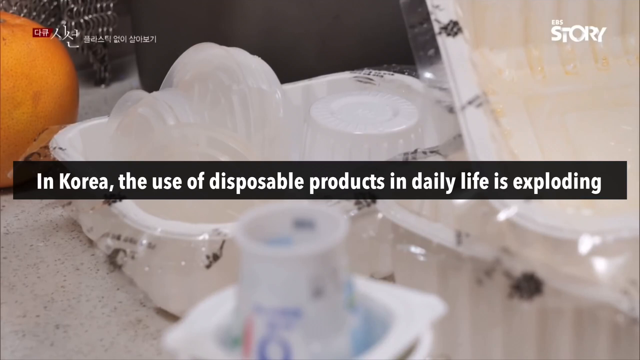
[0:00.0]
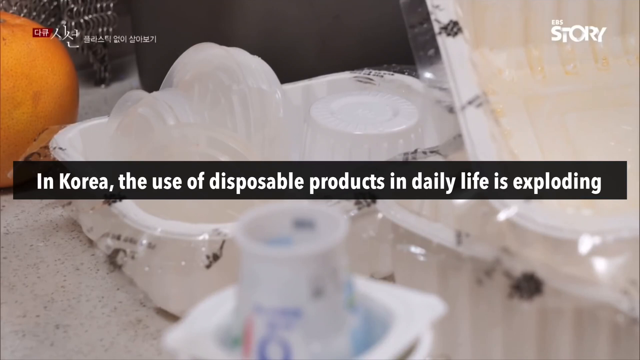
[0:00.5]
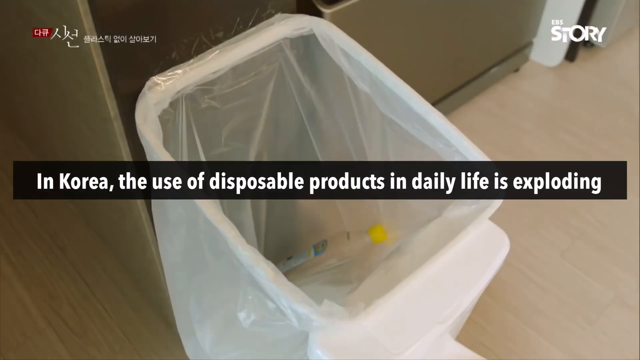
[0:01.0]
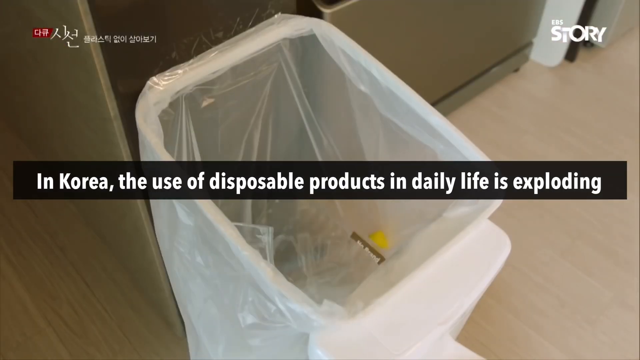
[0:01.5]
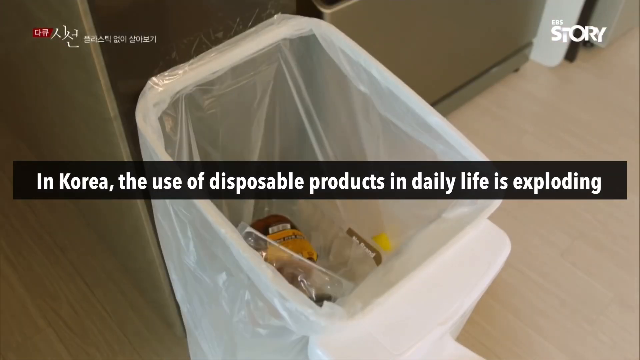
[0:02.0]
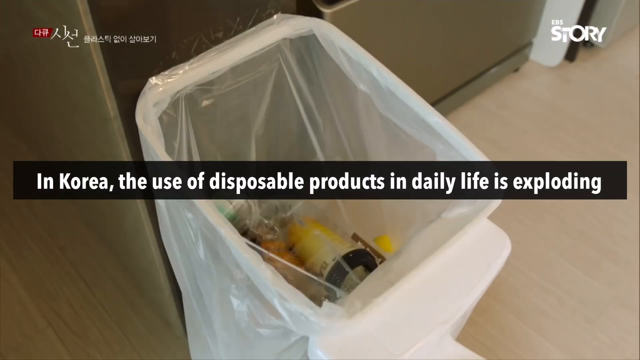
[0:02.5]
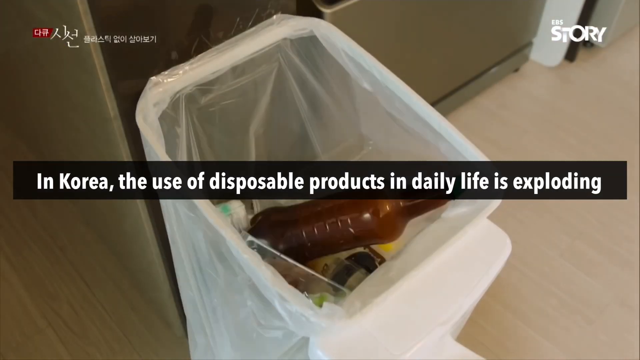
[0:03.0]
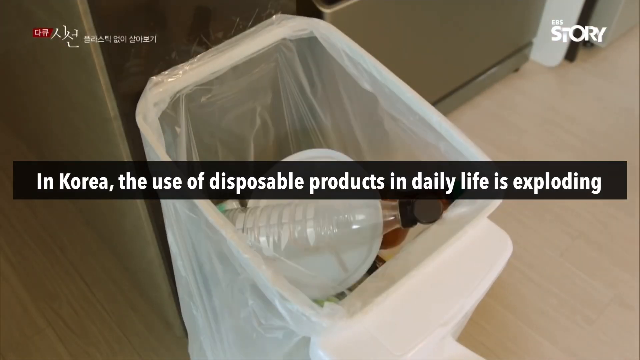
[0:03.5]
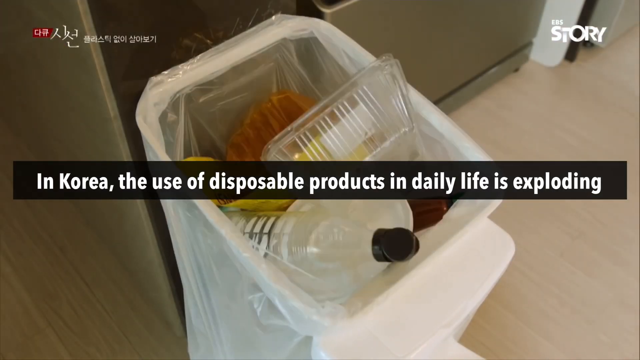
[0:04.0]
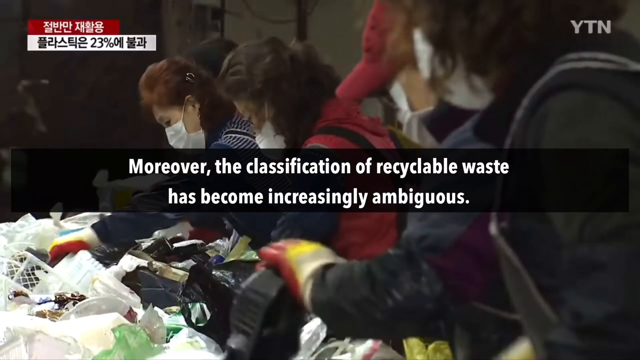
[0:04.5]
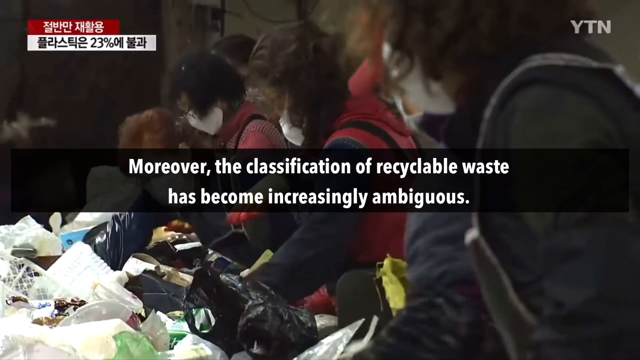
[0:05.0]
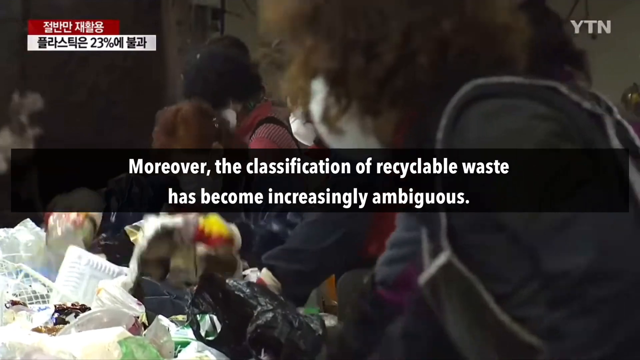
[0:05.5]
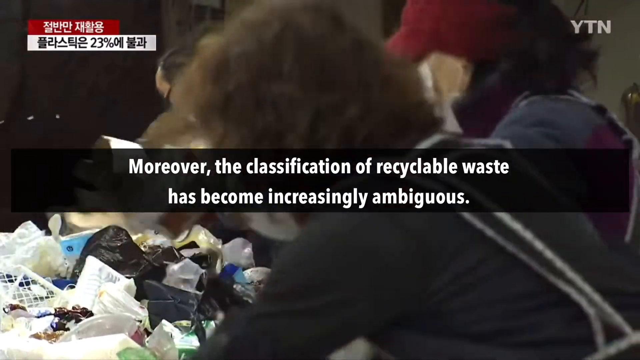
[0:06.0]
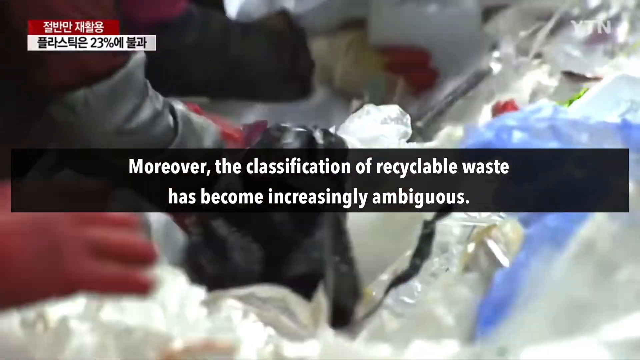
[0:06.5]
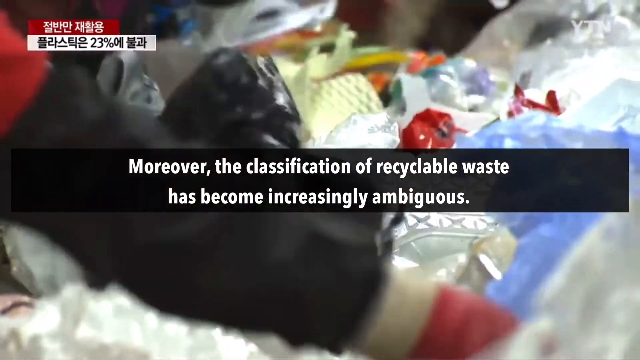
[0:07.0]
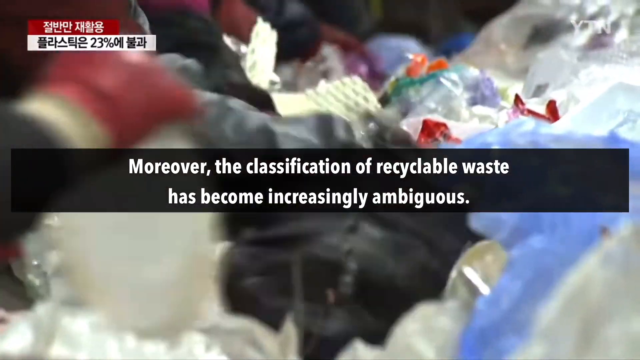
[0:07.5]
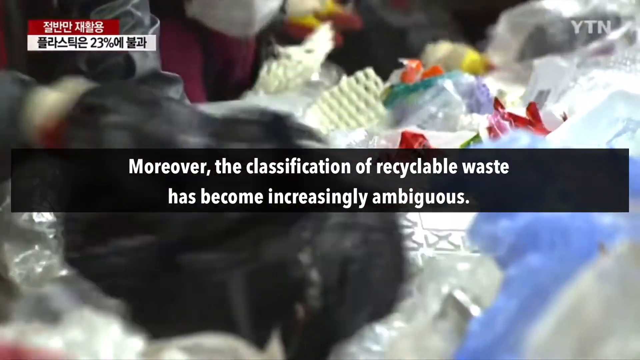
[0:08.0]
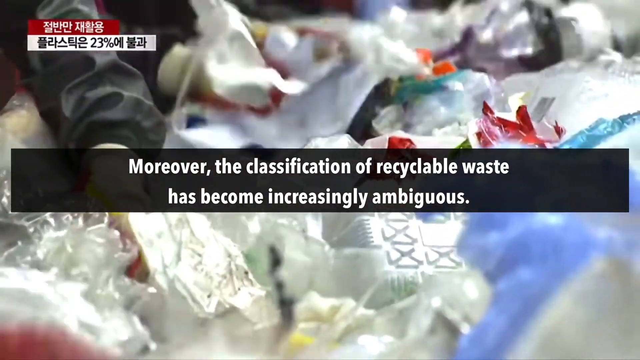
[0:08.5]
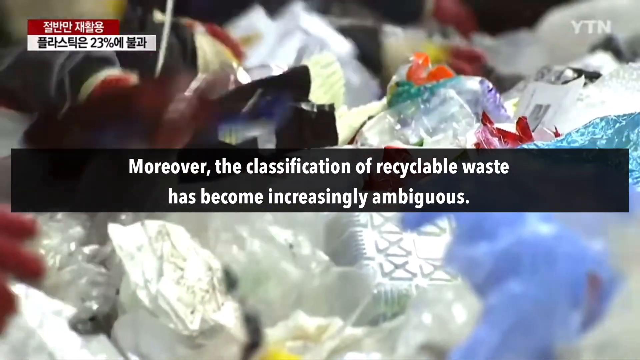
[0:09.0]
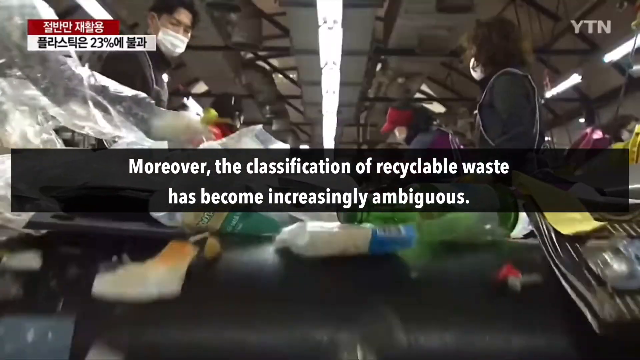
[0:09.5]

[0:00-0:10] The words "in Korea, the use of disposable products in daily life is exploding" appear in white font in the center, inside a black rectangular shape. Behind the text are an orange and other household dishes. The scene transitions to what is possibly a trash bag or a recycling bag with bottles and plastics inside. It then transitions to about four or five women going through recyclable waste, with a caption in the center that reads "moreover the classification of recyclable waste has become increasingly ambiguous."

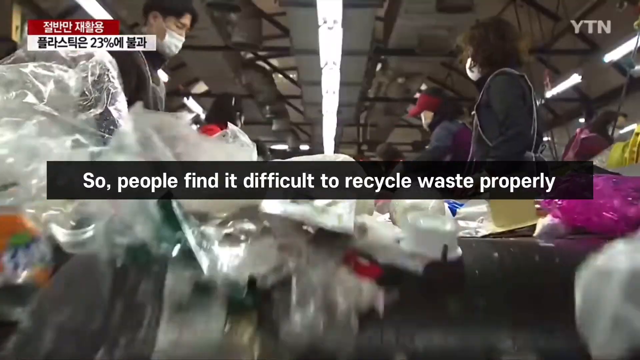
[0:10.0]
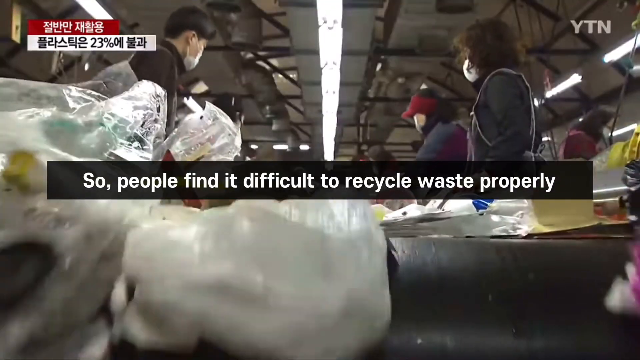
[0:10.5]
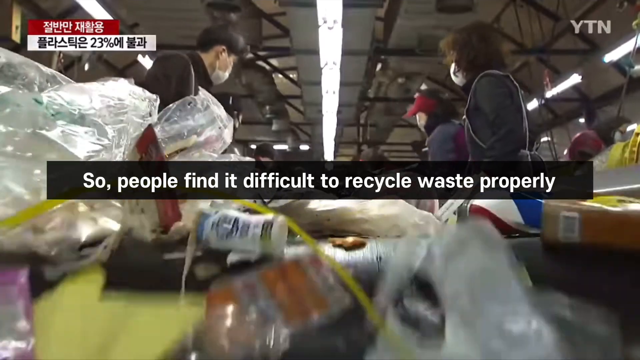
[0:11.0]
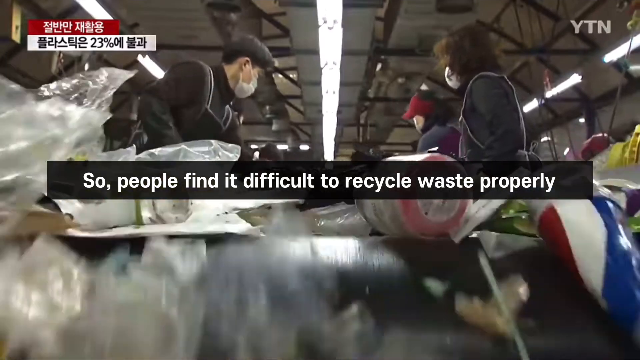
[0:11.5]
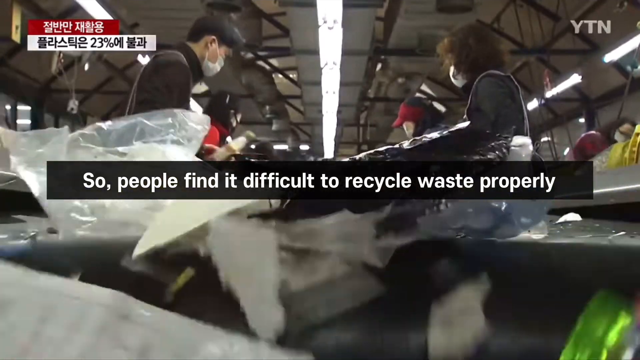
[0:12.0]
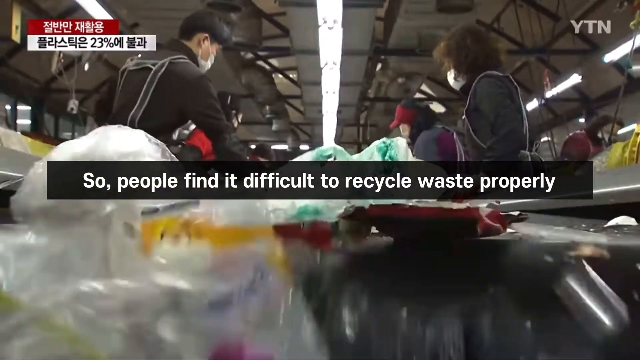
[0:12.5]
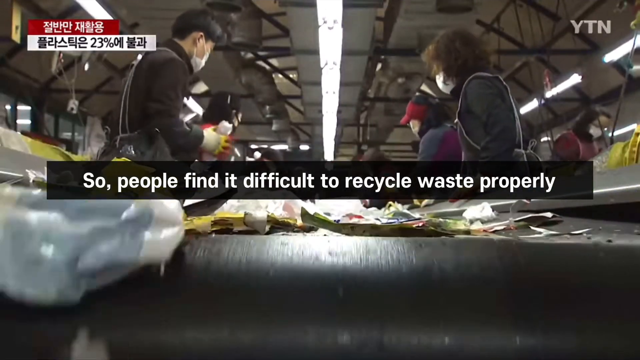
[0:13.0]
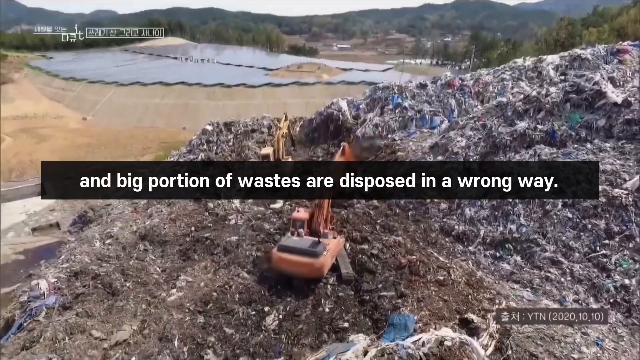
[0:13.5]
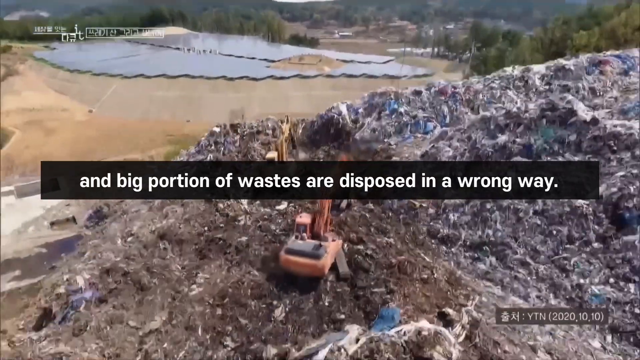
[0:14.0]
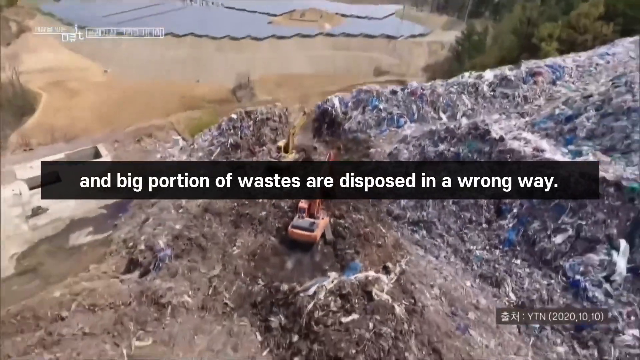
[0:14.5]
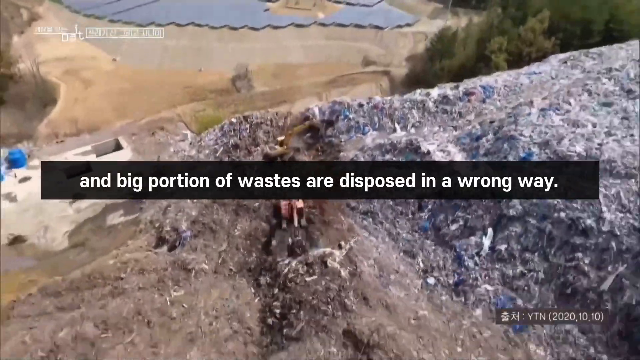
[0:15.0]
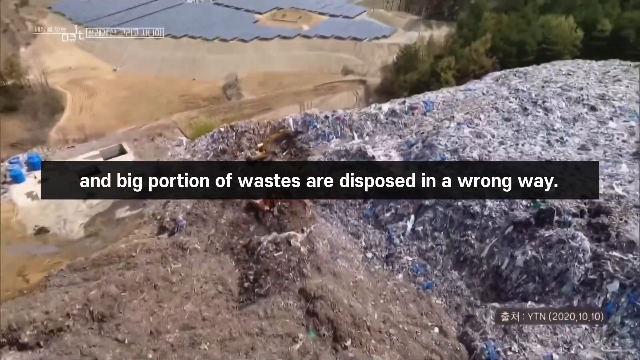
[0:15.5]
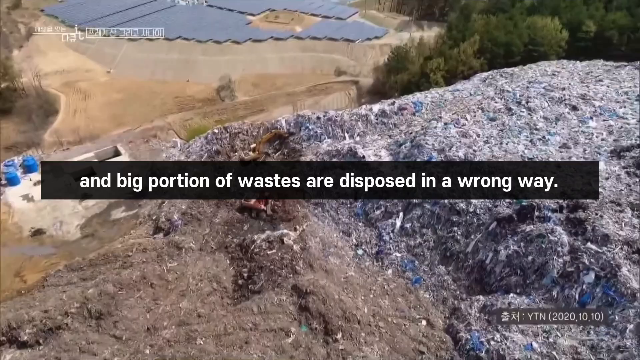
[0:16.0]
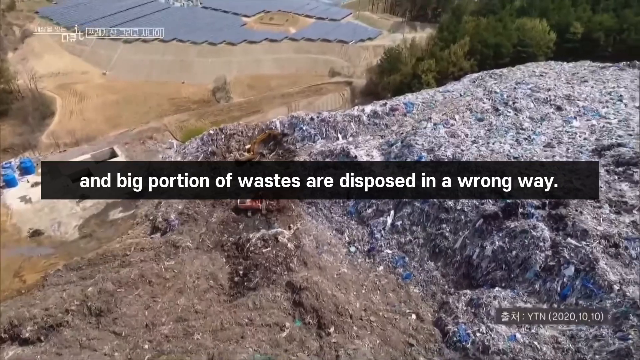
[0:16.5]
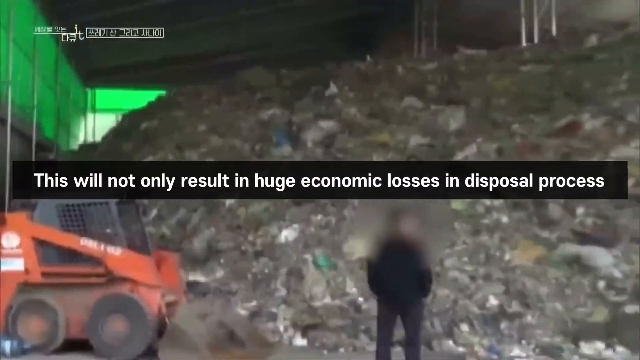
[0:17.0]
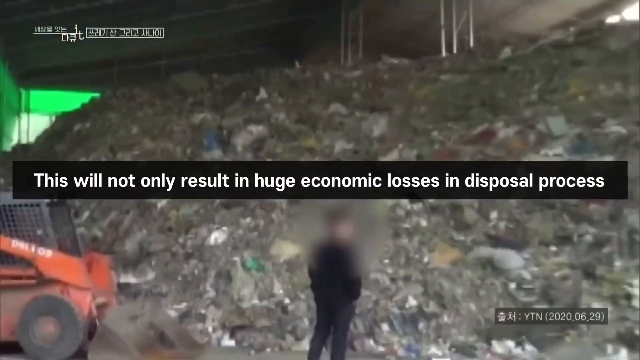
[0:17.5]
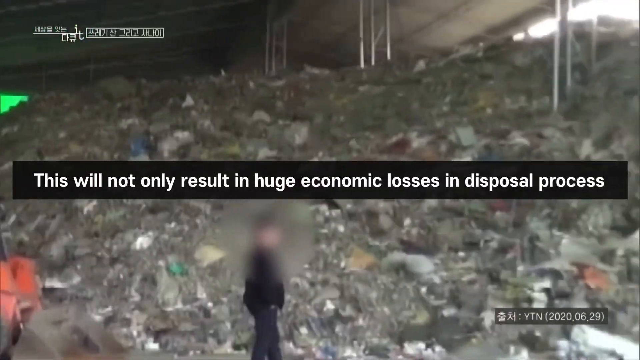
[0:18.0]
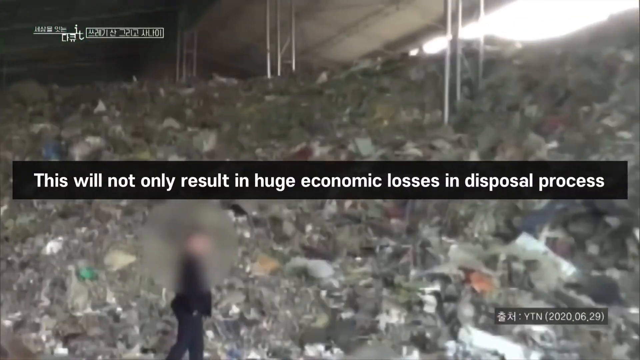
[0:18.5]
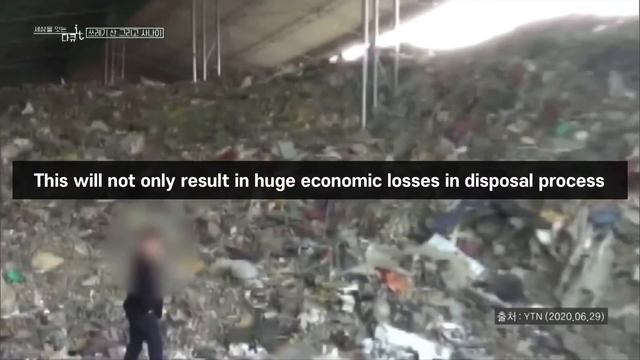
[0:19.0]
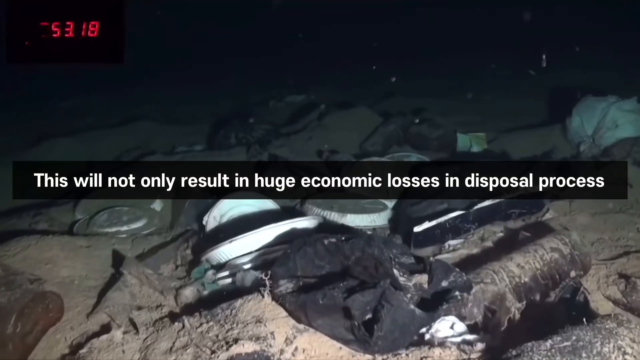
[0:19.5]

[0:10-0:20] About three or four women are gathered by a conveyor belt, sorting through recyclable waste. A caption in the center, in white font in front of a black rectangular box, reads "so people find it difficult to recycle waste properly." In the right corner are the letters "YTN", possibly representing the broadcasting station. The scene transitions to a large landfill, with the caption "and big portion of waste are disposed in a wrong way" in the center. The camera pans outward, showing how much waste has accumulated in that region. In the next scene, the caption "this will not only result in huge economic losses in disposal process" appears in white font in the center, over the accumulated waste in the area and in a large body of water.